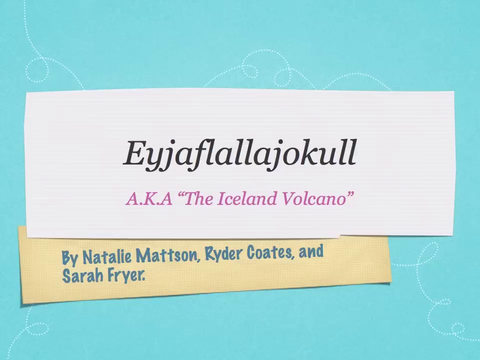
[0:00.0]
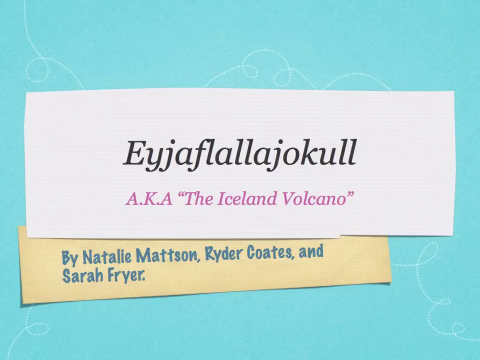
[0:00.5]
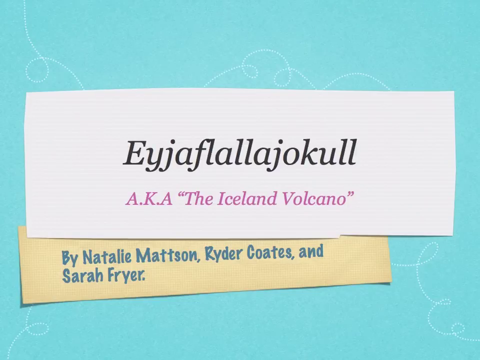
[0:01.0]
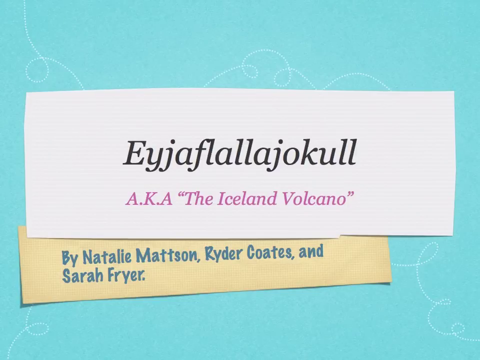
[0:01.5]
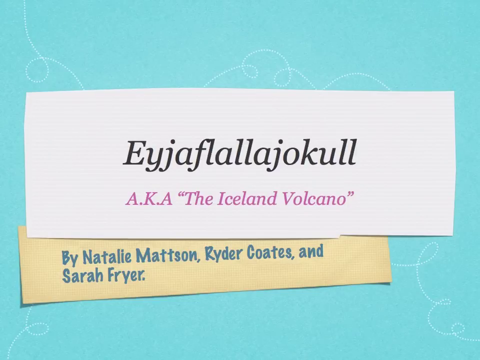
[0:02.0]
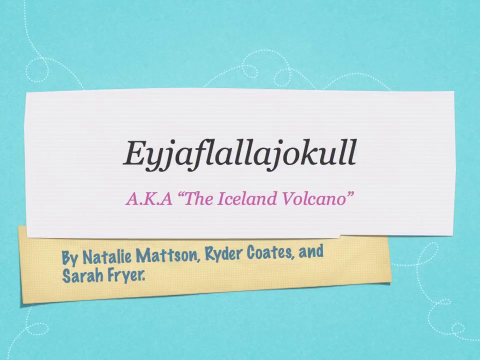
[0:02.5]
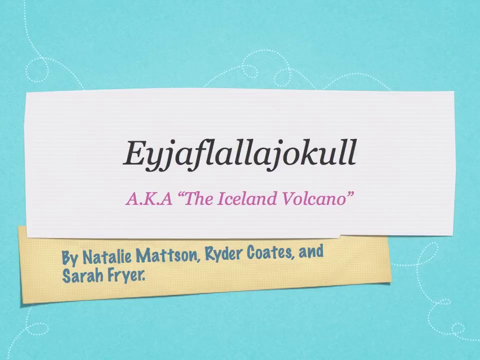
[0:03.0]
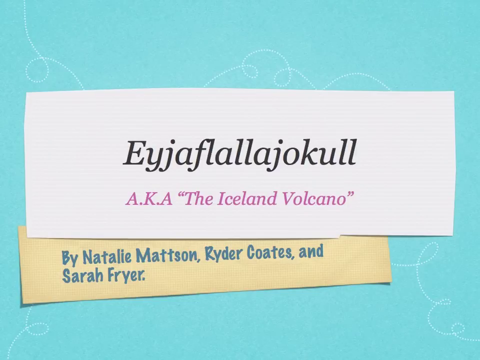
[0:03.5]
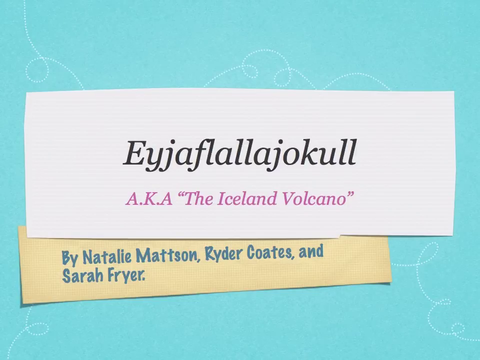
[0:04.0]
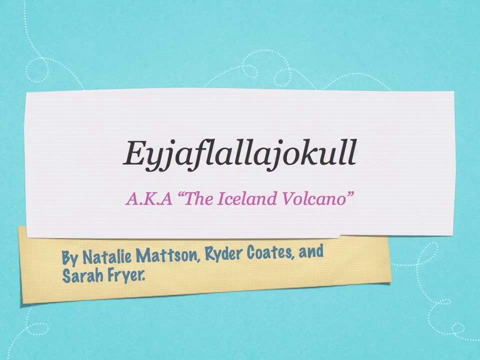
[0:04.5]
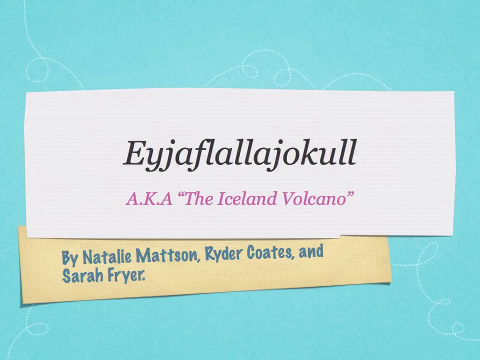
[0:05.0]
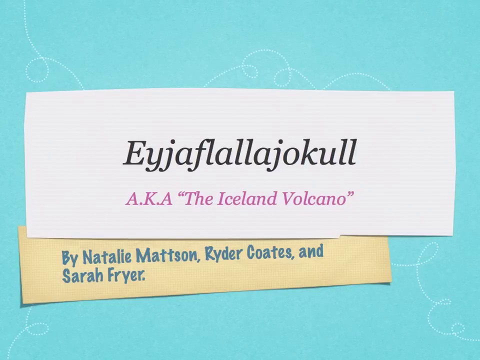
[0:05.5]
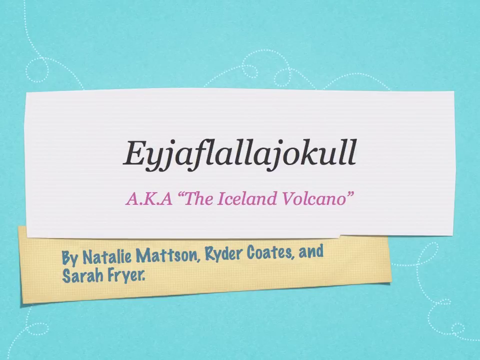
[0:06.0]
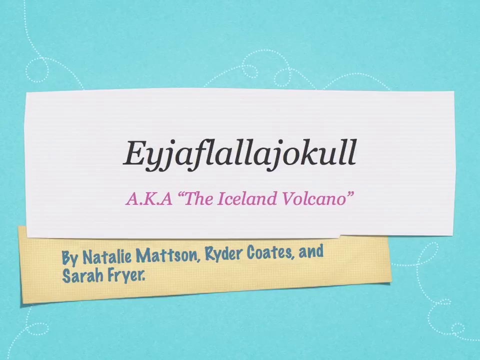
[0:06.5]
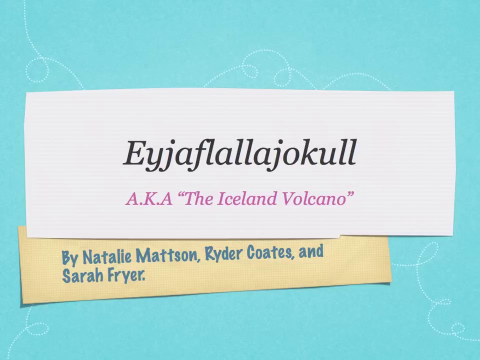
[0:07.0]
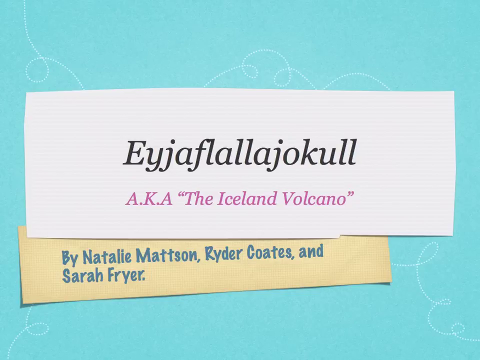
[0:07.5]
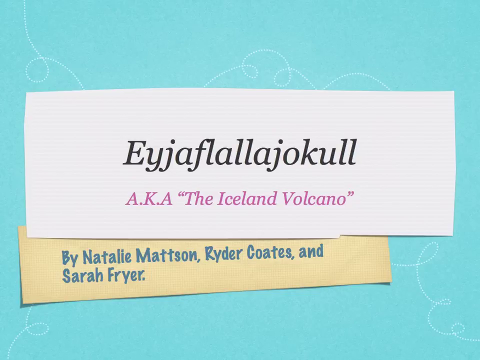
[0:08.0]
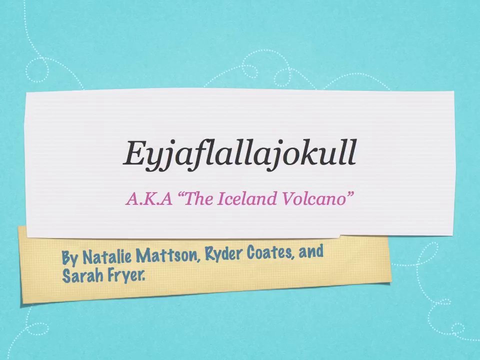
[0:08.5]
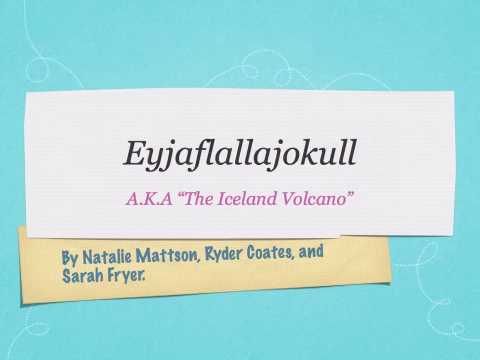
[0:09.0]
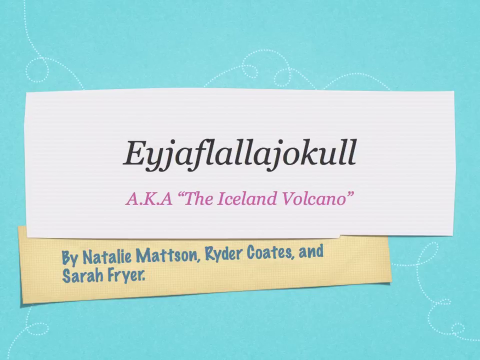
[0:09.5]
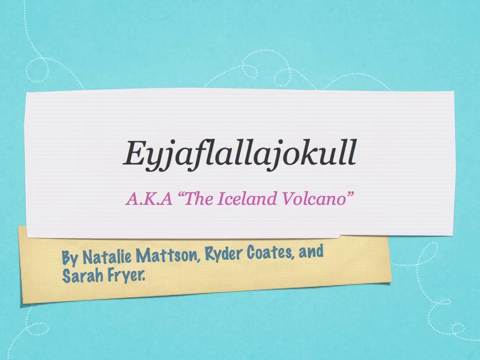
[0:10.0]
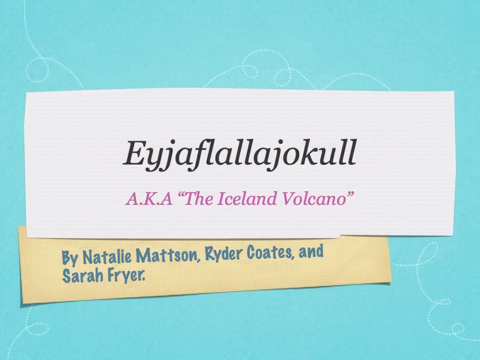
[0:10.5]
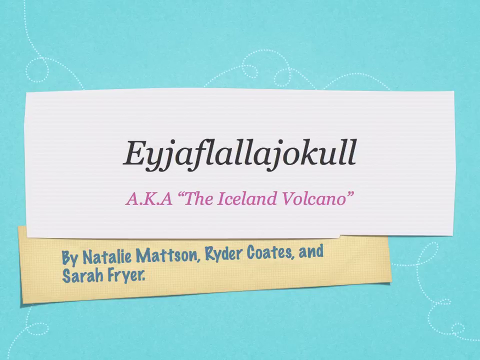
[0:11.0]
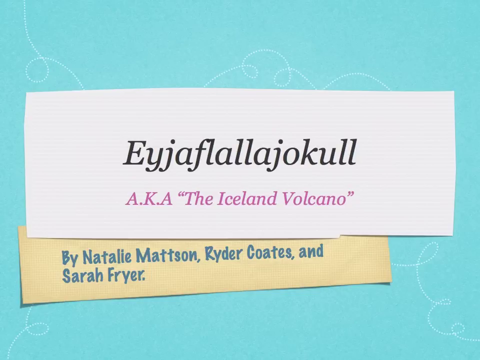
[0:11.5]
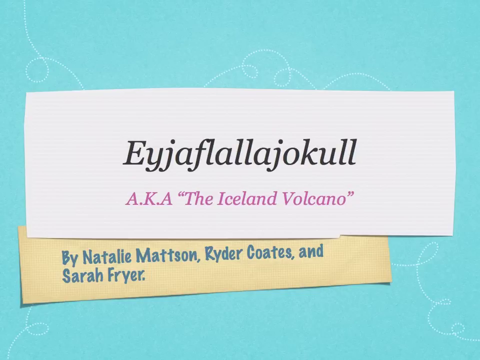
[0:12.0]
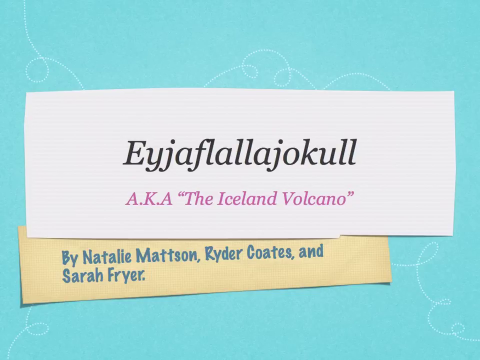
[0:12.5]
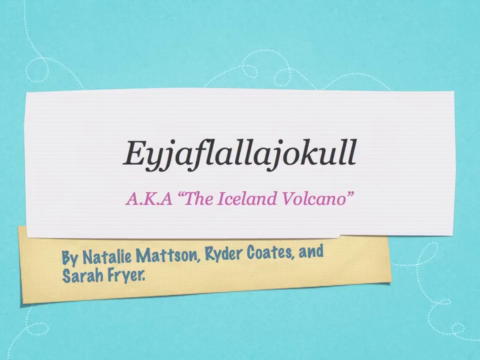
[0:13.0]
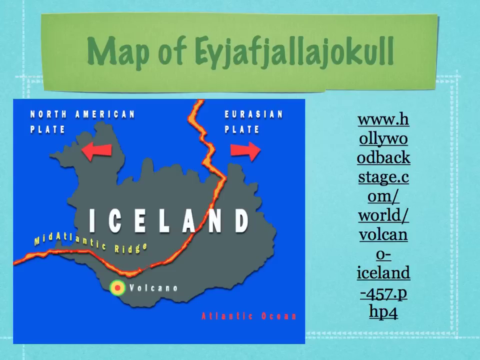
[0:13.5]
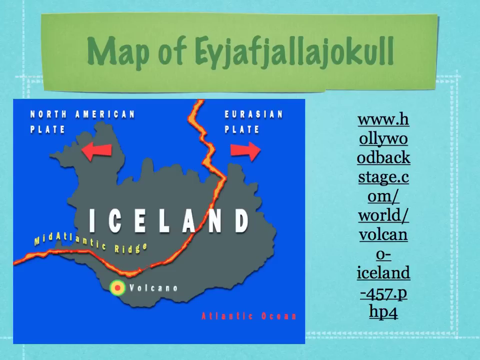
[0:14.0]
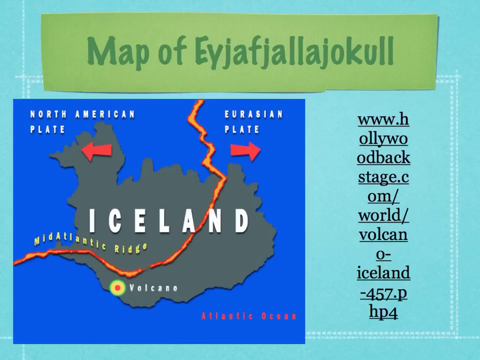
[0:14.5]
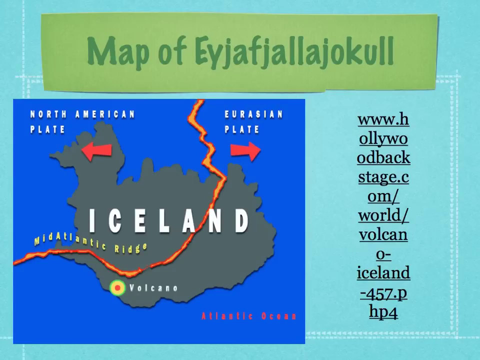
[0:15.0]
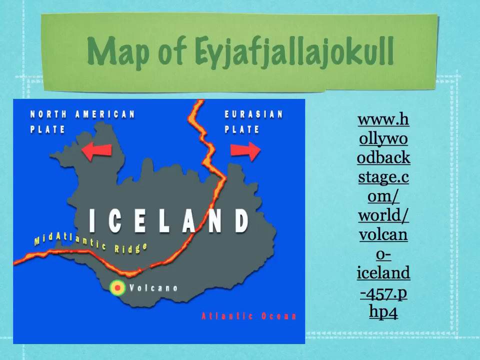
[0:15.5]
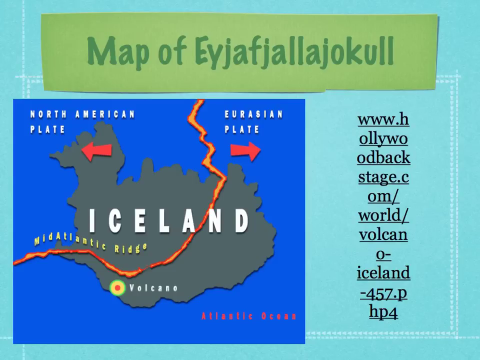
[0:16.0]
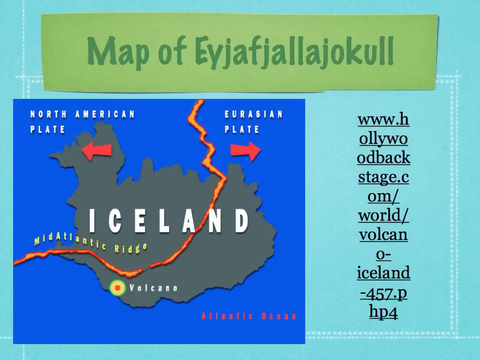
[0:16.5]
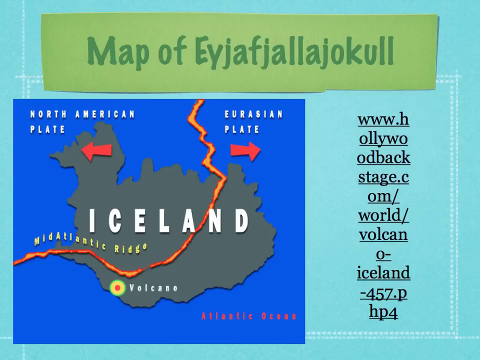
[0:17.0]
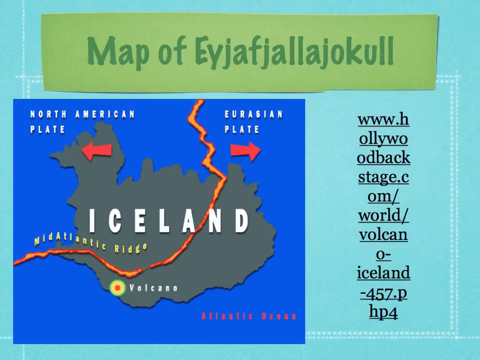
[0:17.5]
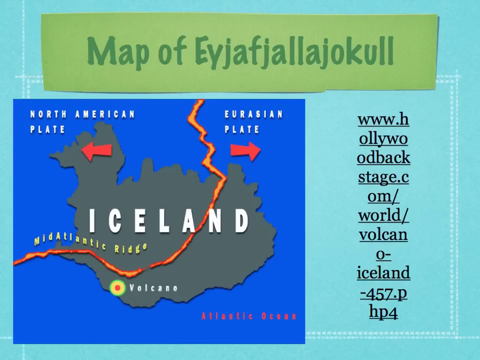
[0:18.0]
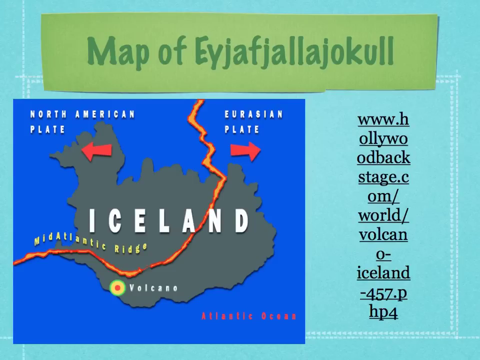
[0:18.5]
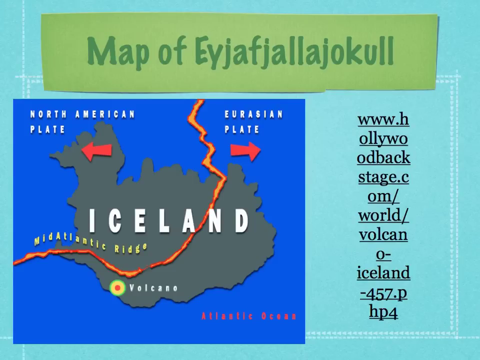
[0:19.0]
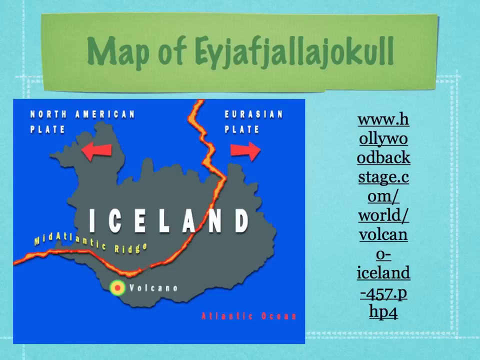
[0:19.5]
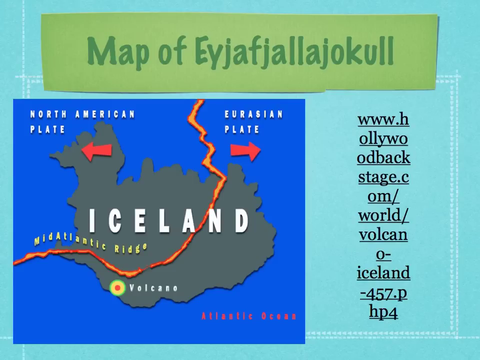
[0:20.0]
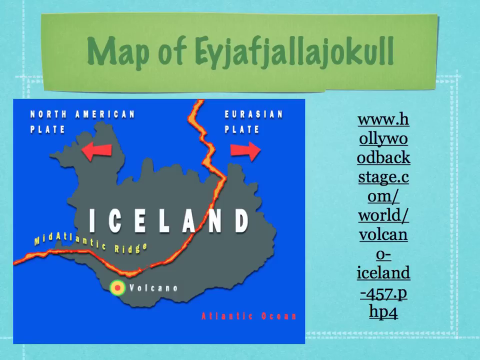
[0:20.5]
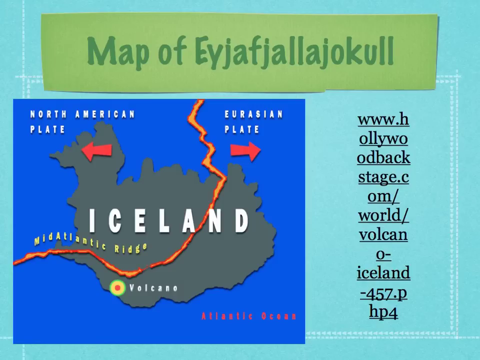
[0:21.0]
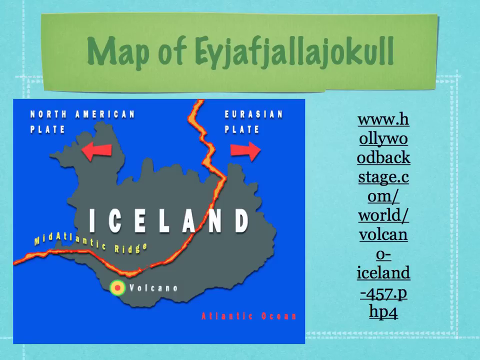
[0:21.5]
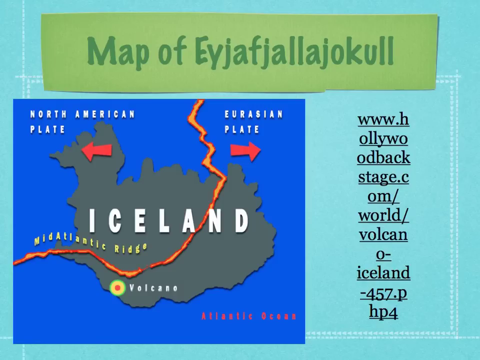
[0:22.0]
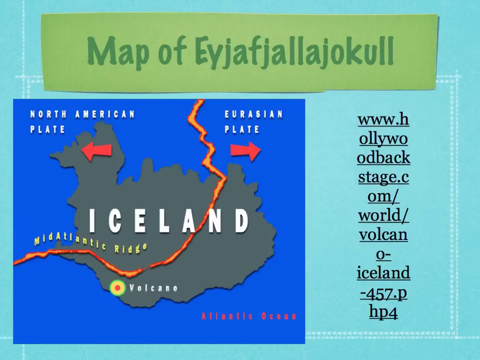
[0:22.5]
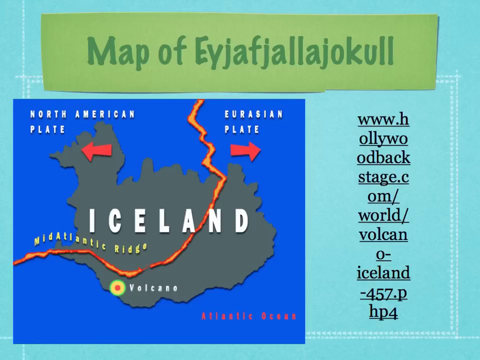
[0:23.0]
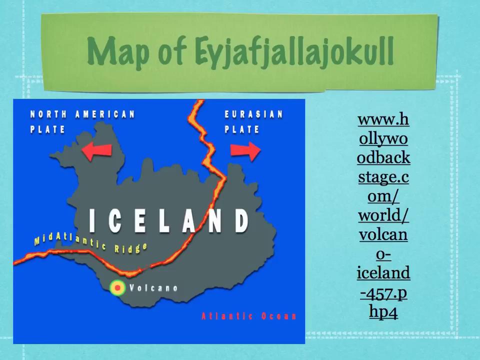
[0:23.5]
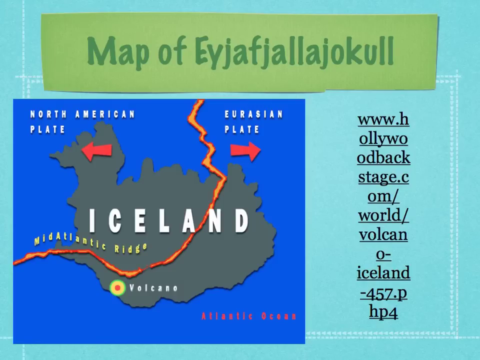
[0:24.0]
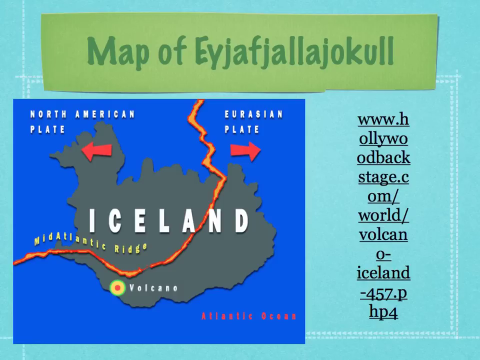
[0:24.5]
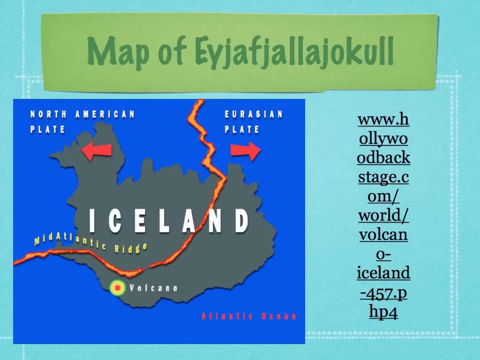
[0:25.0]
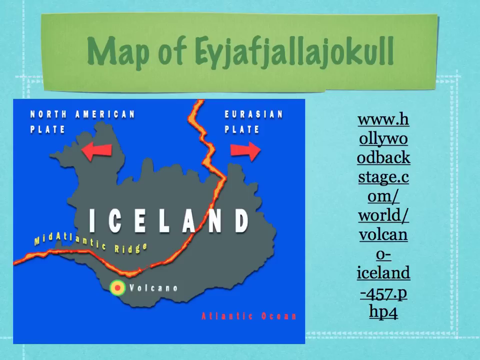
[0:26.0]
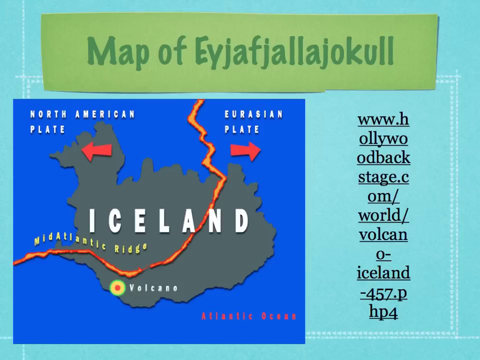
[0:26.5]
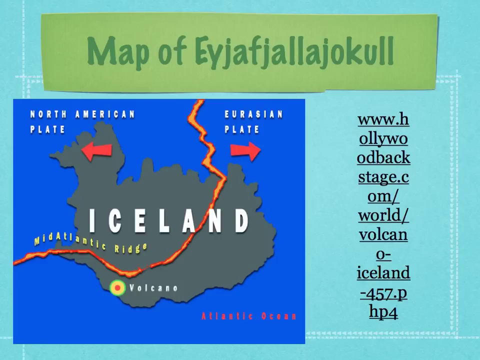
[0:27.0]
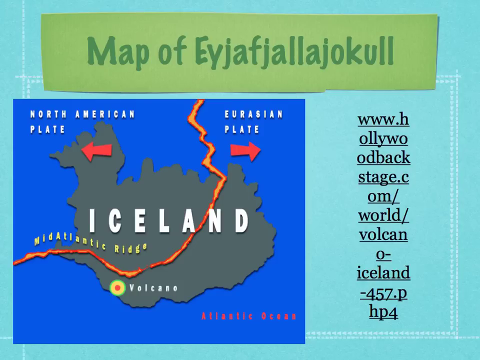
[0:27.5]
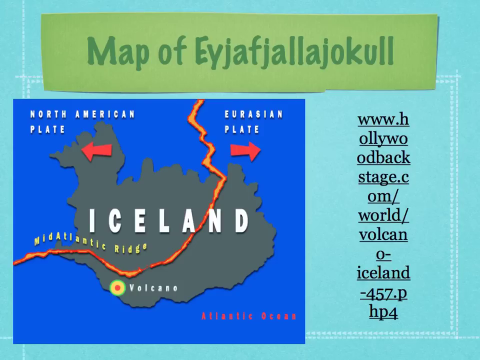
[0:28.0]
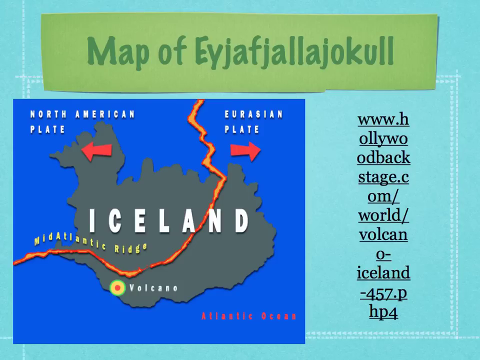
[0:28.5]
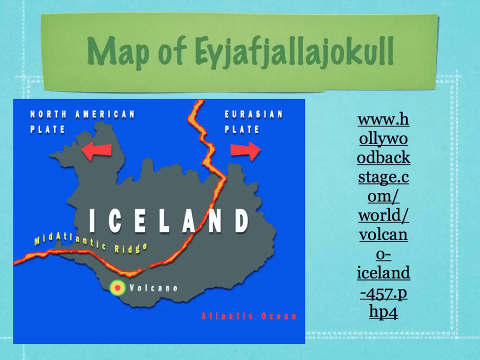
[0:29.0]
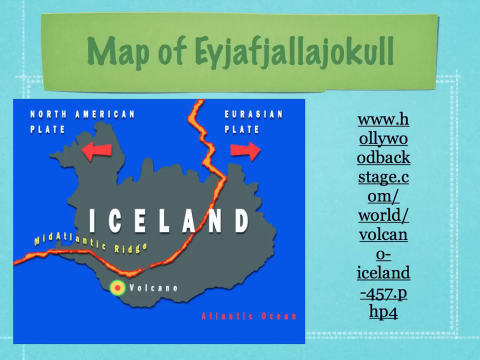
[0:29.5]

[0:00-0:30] A blue background has some white squiggly lines running from the top left corner to the bottom right. On a white rectangle that looks sort of like unevenly cut paper, text reads "Eyjaflallajokull, A.K.A. 'The Island Volcano'". Below that, on a yellow rectangular piece of paper, text reads "By Natalie Mattson, Ryder Cotes, and Sarah Fryar". The first printed text is black and the second is pink. The video then transitions to a second slide with a green banner reading "Map of Eyjafjallajokull". Taking up a big space on the left side of the slide is a blue background with Iceland on top of it, with black and then white text reading "Iceland" over it. A jagged orange line goes across the location image, and yellow print above the line on the lower left side reads "Mid-Atlantic Ridge". On the right side, some black text cites where the image was potentially found.